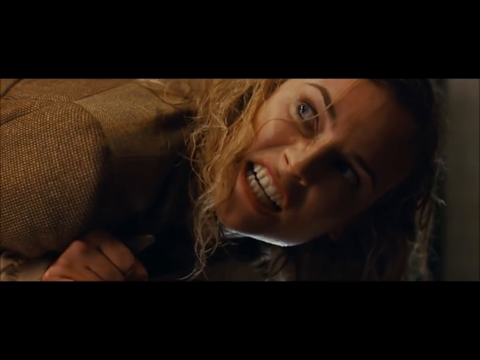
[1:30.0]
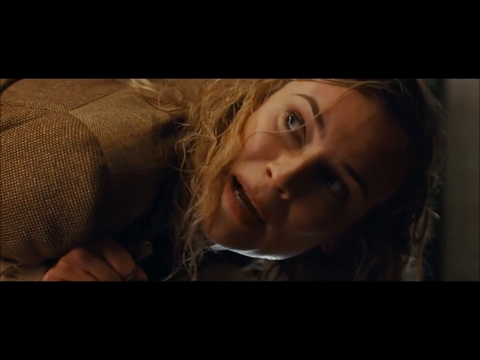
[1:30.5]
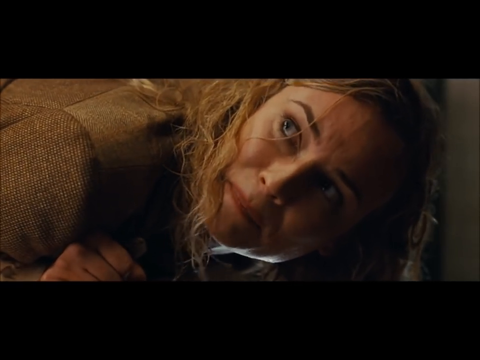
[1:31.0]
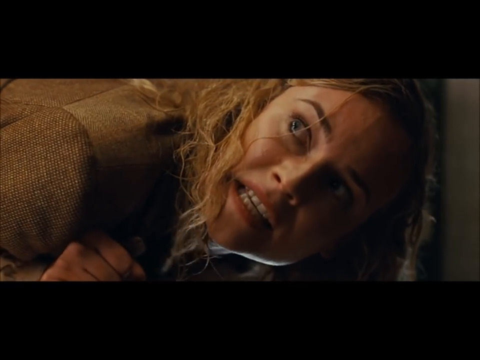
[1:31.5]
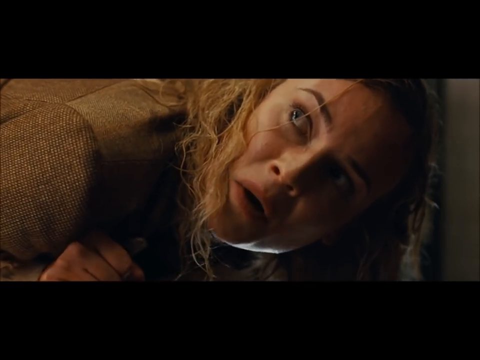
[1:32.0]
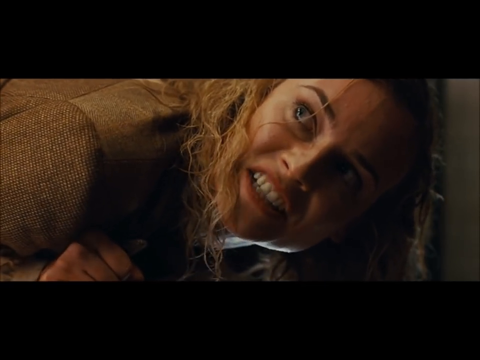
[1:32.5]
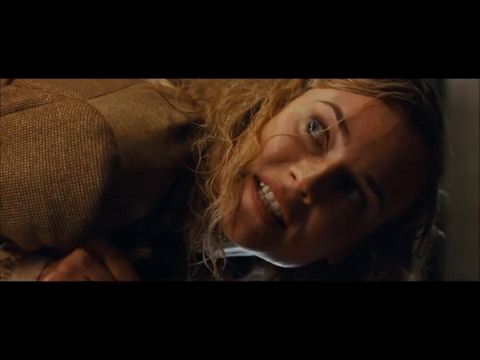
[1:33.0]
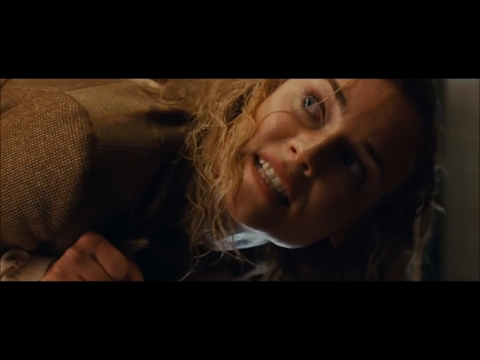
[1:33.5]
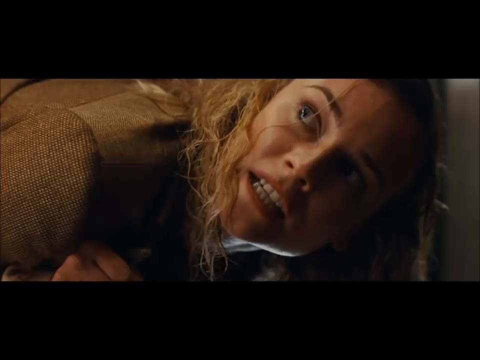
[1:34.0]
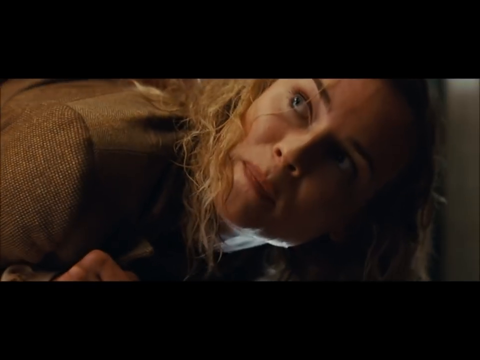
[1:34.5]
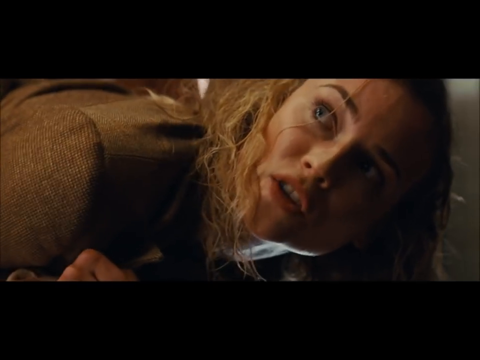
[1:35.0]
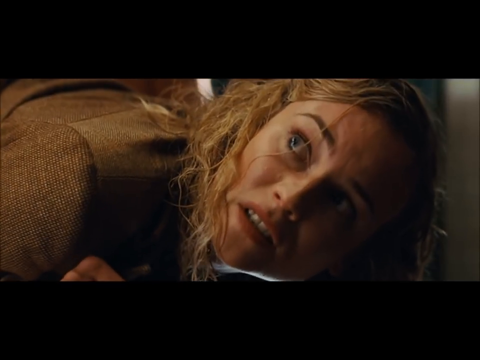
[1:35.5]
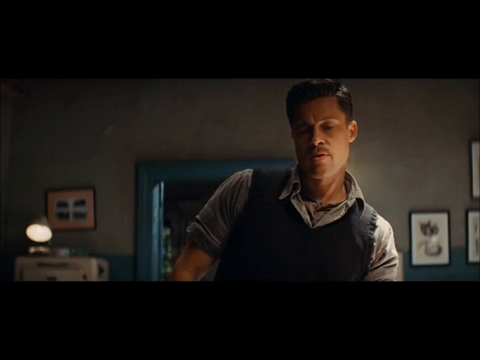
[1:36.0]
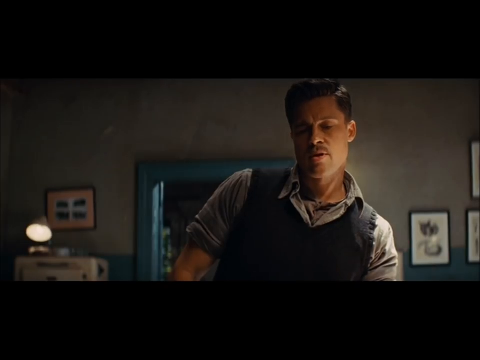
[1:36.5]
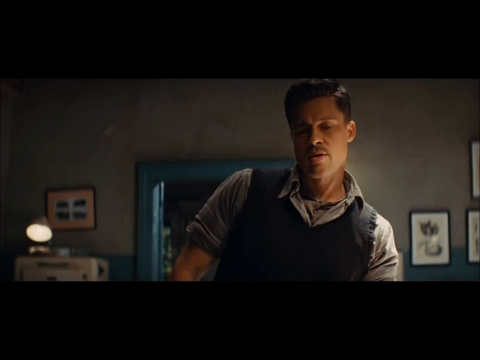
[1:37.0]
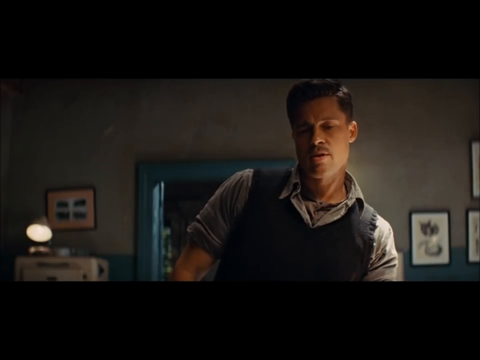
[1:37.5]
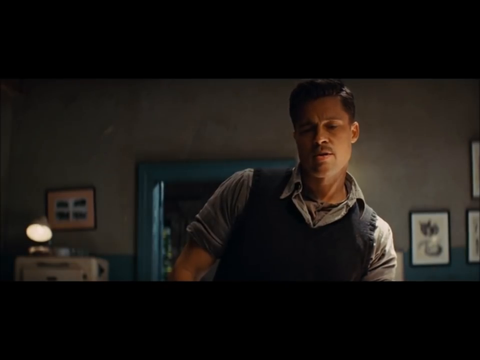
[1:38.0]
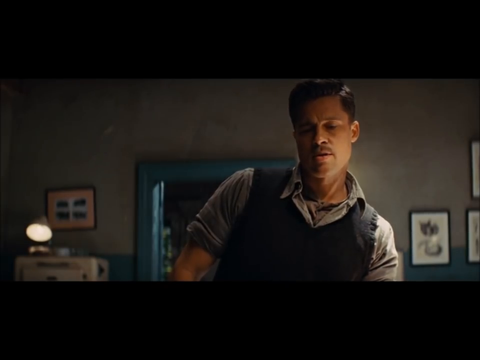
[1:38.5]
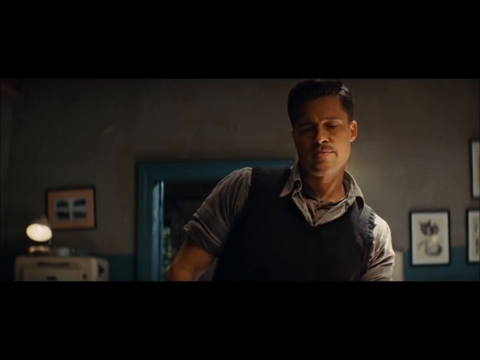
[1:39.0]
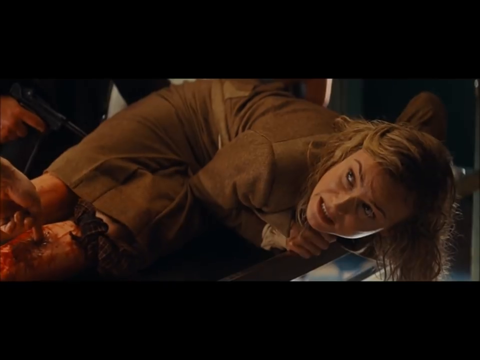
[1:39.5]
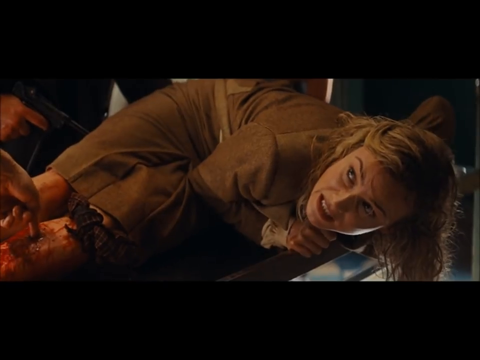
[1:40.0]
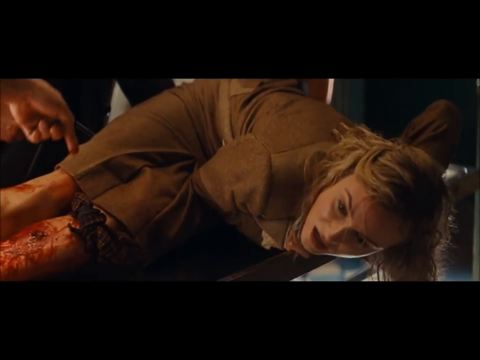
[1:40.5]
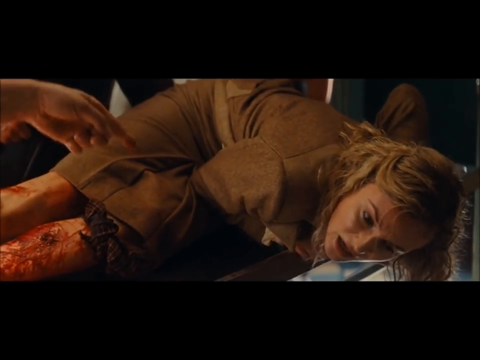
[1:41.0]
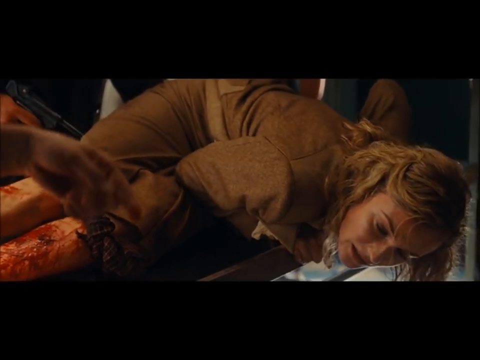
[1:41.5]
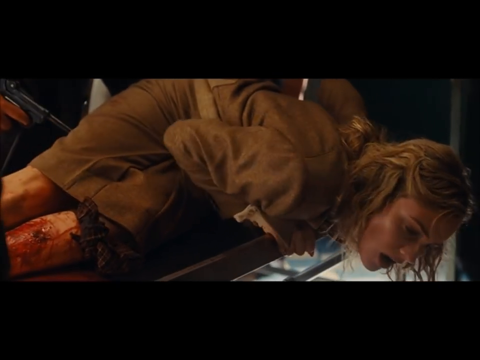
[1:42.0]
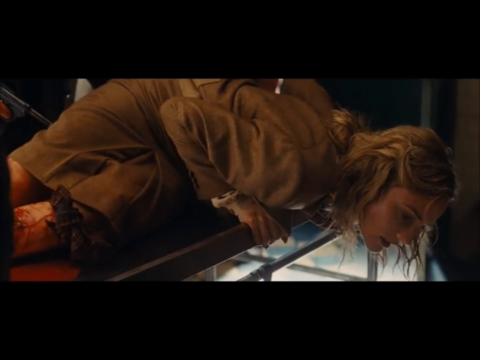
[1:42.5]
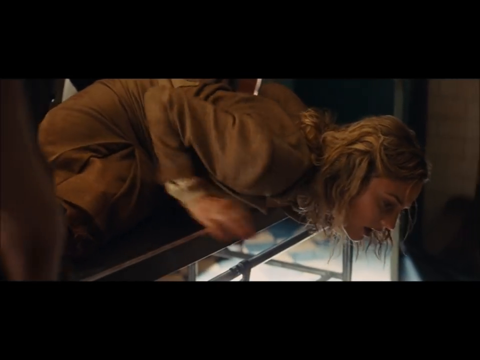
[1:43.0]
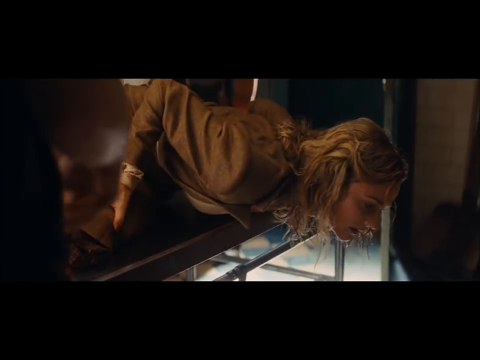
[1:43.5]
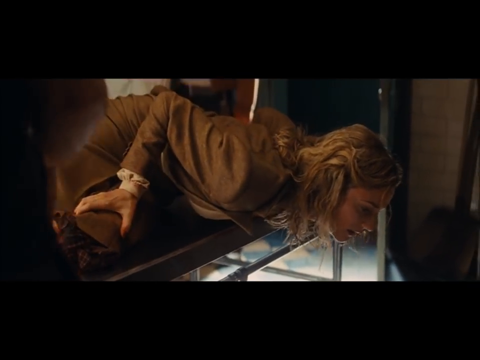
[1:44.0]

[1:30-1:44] The camera films straight at the woman in a close look. She looks to her left and a little up, talking, and seems very angry. The scene cuts to a man in a dimly lit room, with paintings behind him and a lamp to the left, looking down and talking to the woman. A finger is on the woman's bleeding leg, apparently in her wound, and she struggles; then the finger releases as she gasps for air, and the scene cuts.